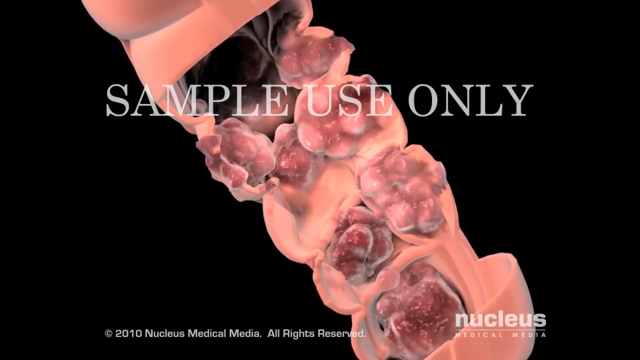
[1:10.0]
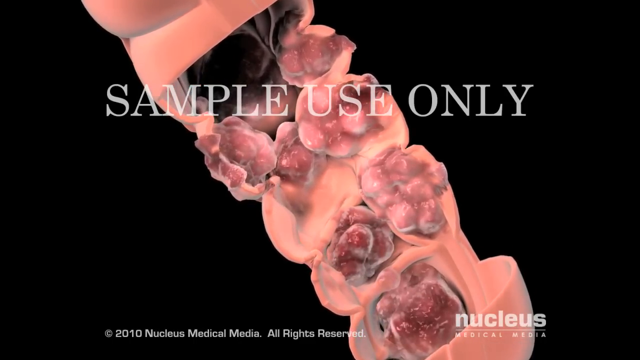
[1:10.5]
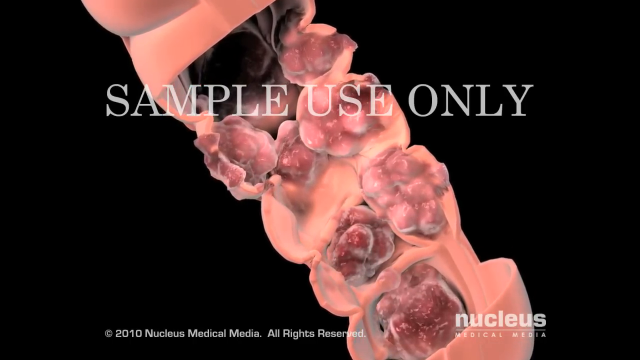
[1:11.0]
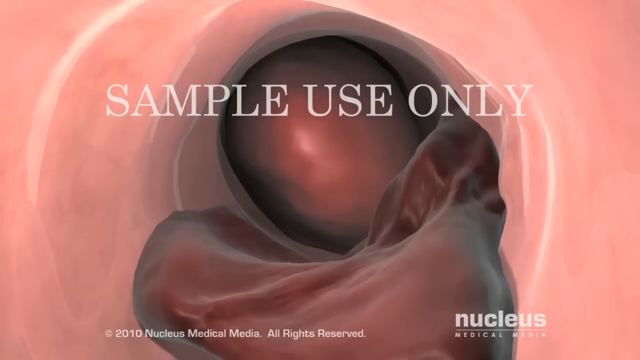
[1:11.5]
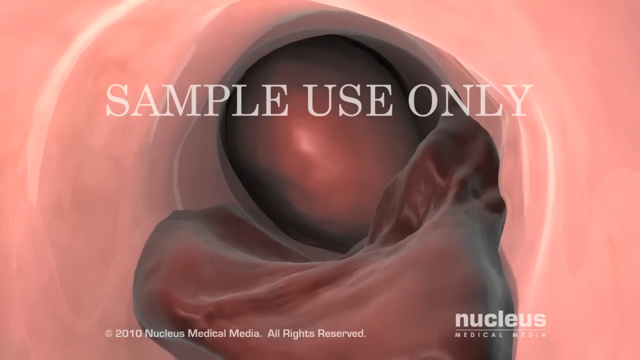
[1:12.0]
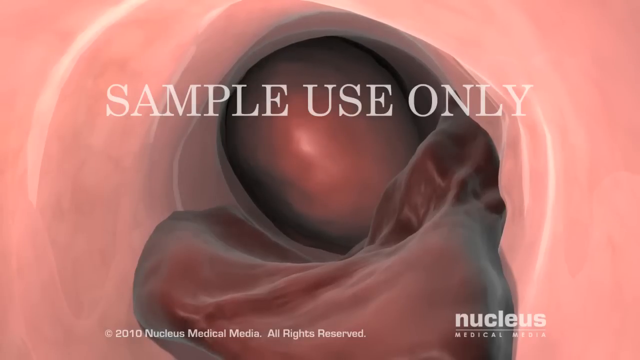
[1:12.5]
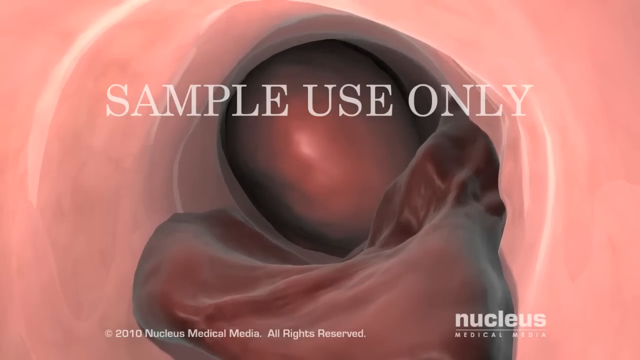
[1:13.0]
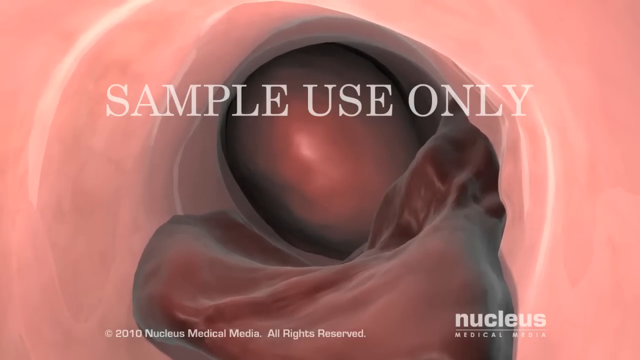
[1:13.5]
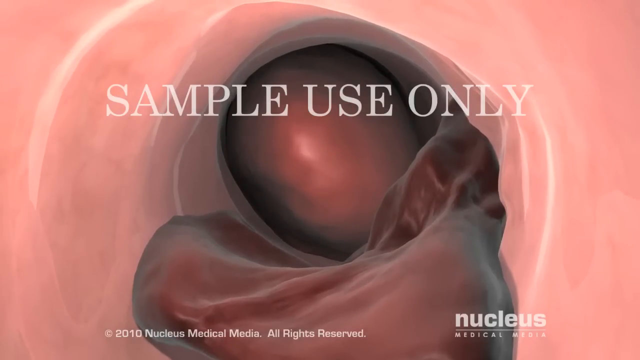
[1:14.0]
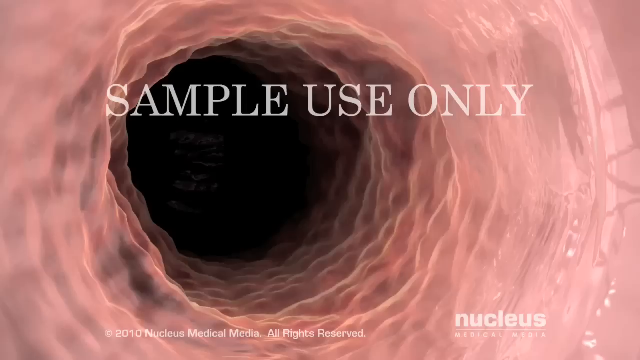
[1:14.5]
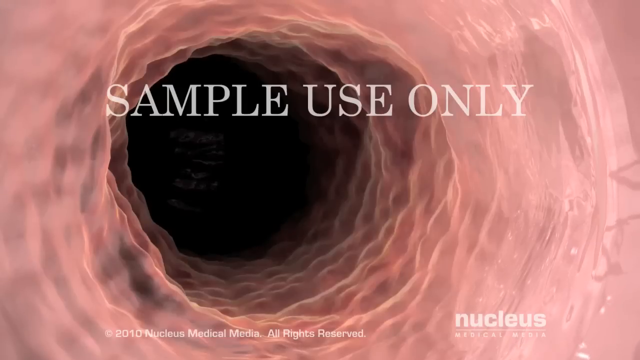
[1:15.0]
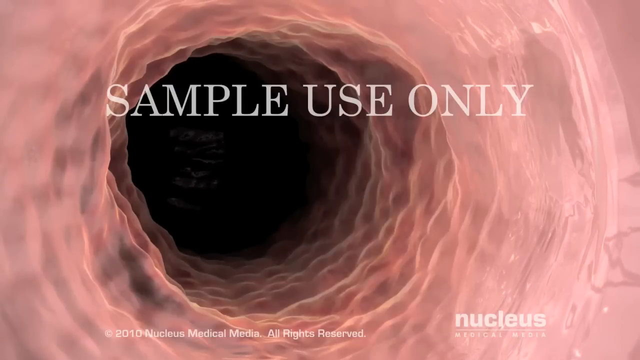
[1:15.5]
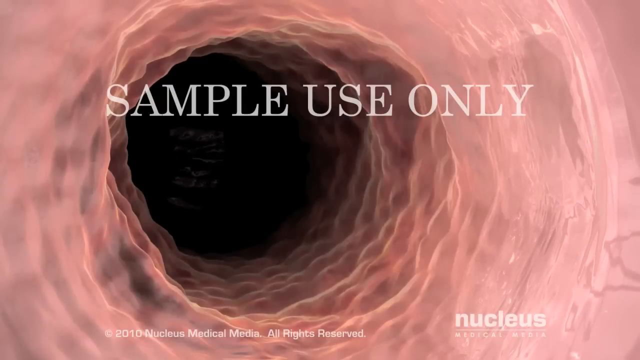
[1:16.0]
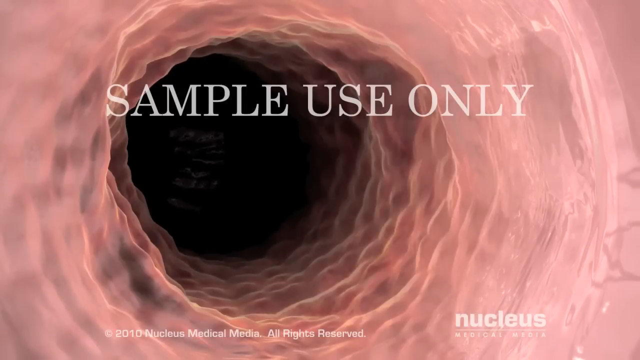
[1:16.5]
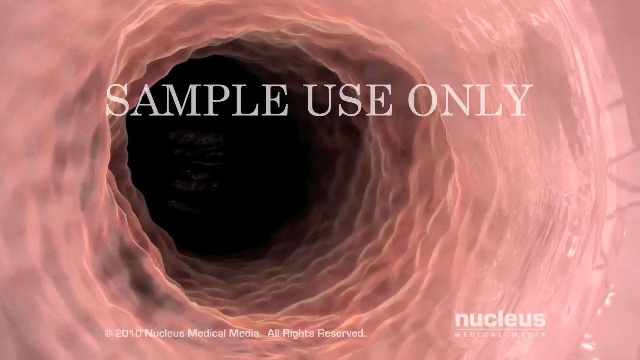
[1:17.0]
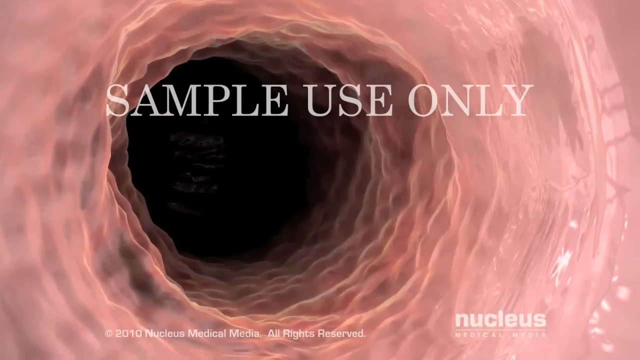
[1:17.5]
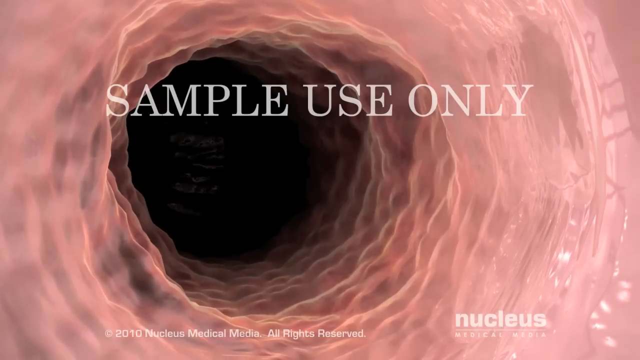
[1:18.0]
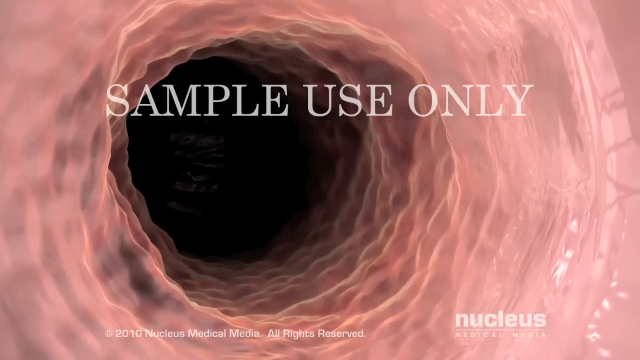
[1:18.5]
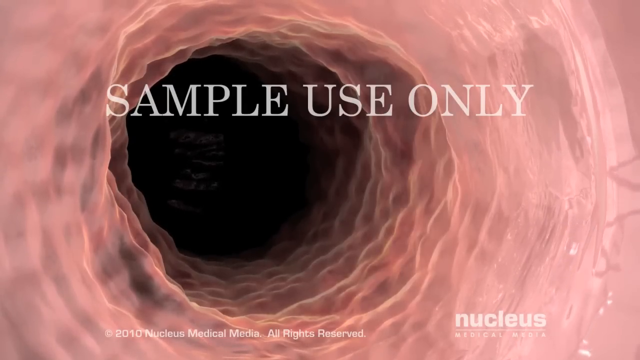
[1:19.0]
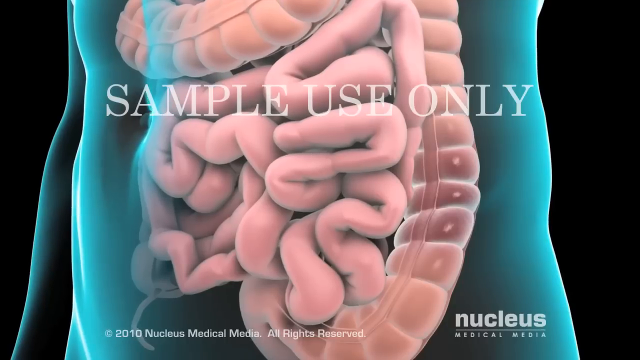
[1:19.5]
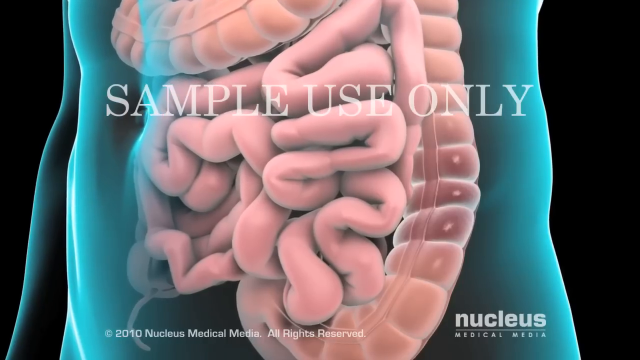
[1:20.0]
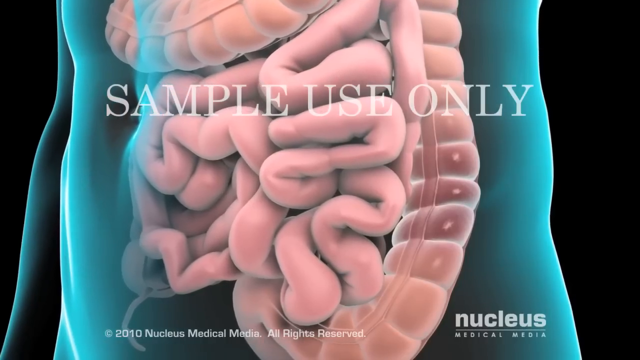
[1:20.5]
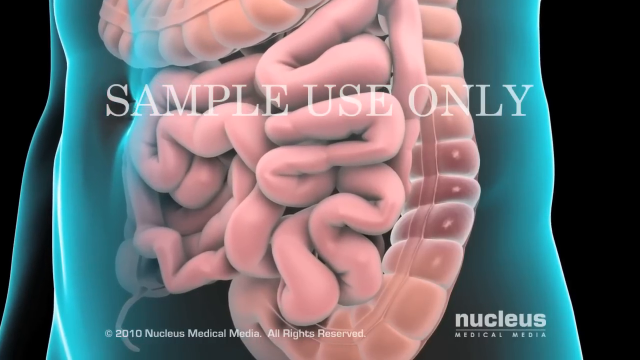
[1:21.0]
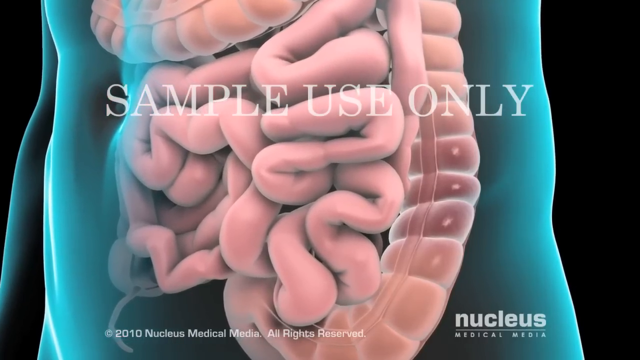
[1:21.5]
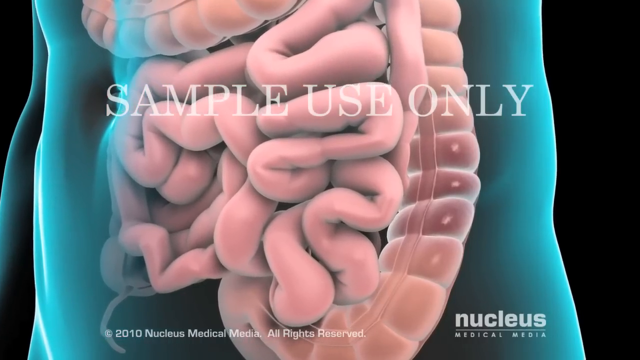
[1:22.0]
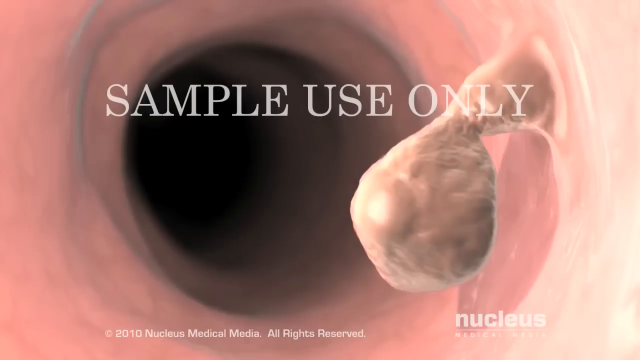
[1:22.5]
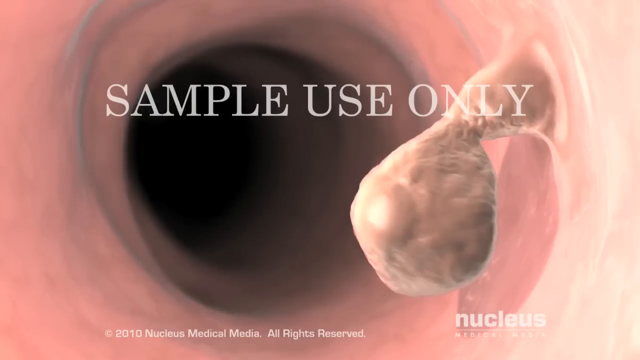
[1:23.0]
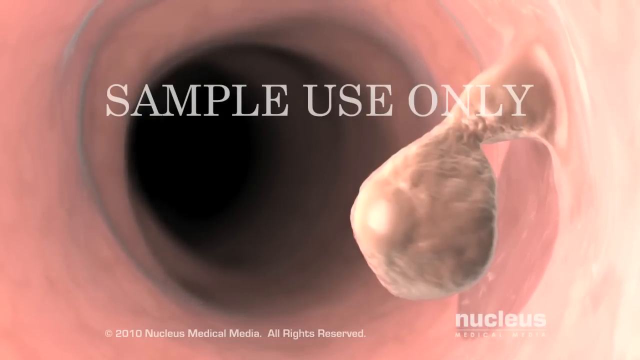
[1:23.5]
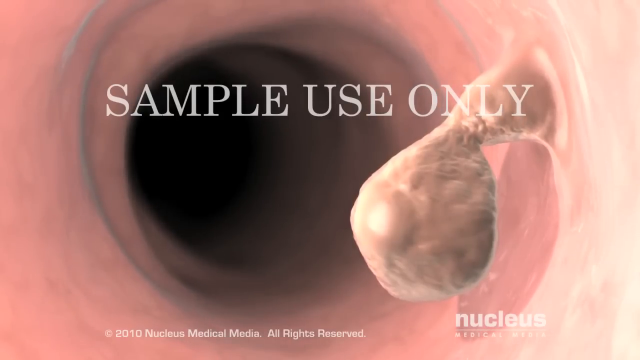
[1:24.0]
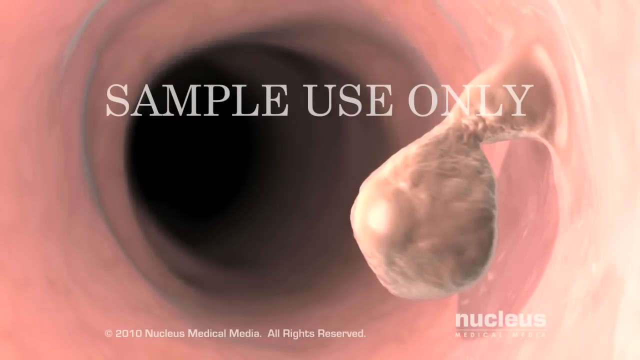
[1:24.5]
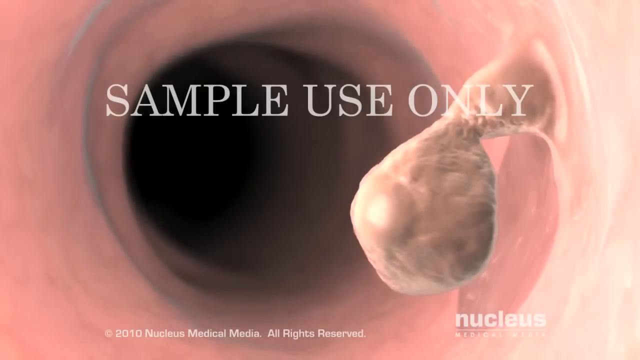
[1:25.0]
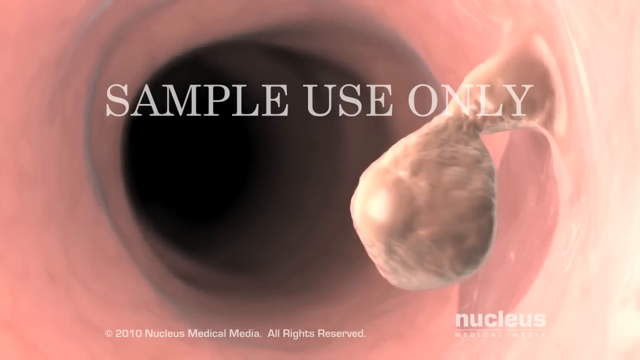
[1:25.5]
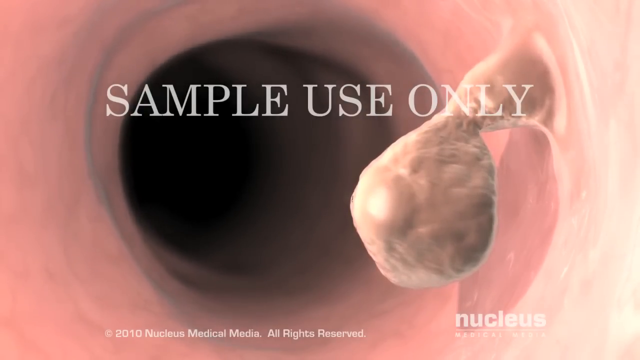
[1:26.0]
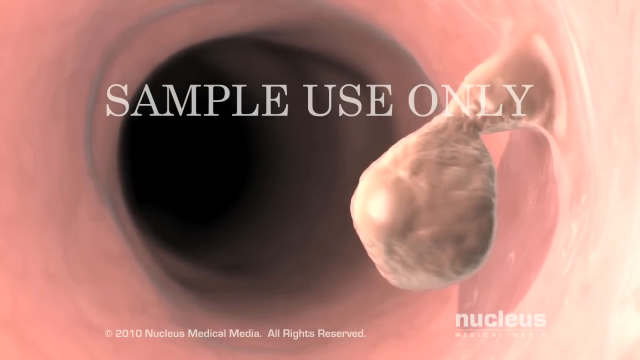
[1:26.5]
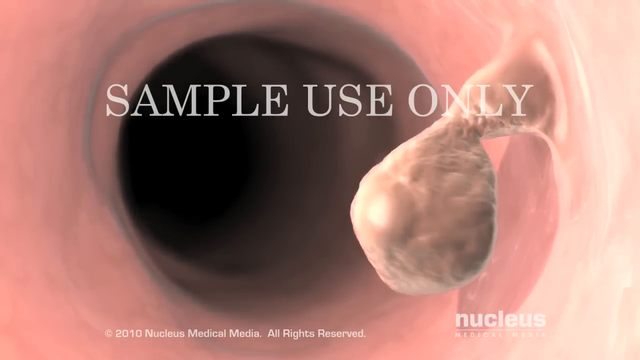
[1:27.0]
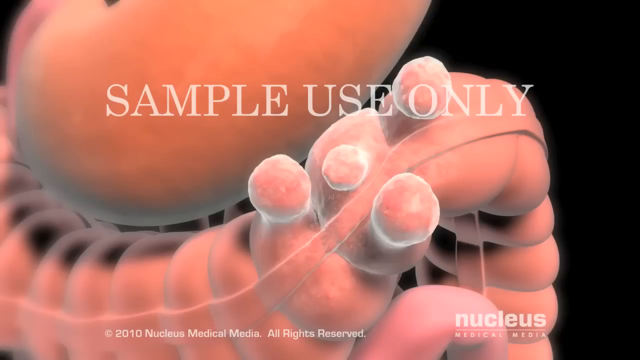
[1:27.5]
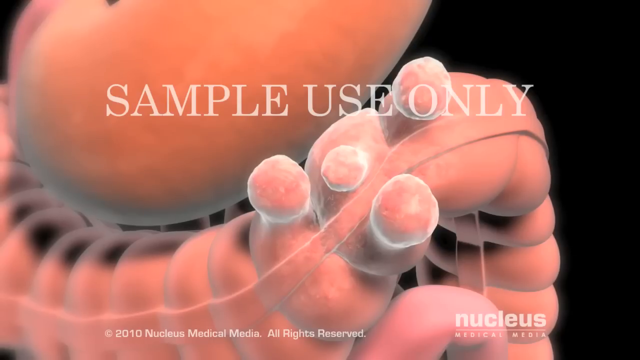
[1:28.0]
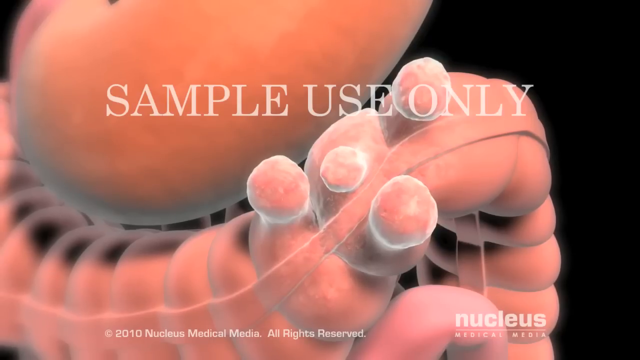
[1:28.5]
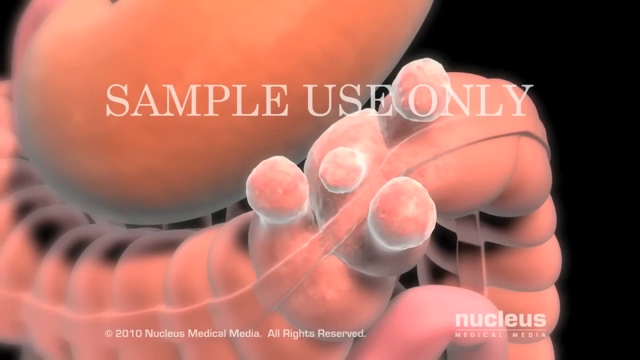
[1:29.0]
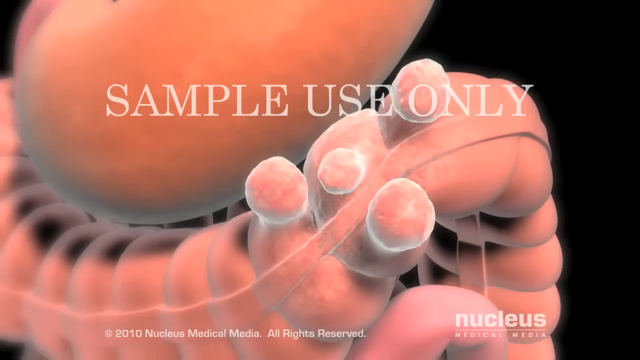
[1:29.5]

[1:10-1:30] "Sample use only" appears in white print, all capital letters. The view looks at the inside of a model intestine, a tube- or tunnel-like structure that is very dark further down, so only a little of it can be seen. A polyp grows off the side wall of the intestine: it is cream-colored, with a bulbous end and a stem attached to the inside of the intestine. The intestine is then seen as a whole, with round, circular growths on its outside. When a section is taken off and the top portion removed, little beads are visible inside the intestine. Then a model body shows the entire digestive system and how the intestine looks in the body.